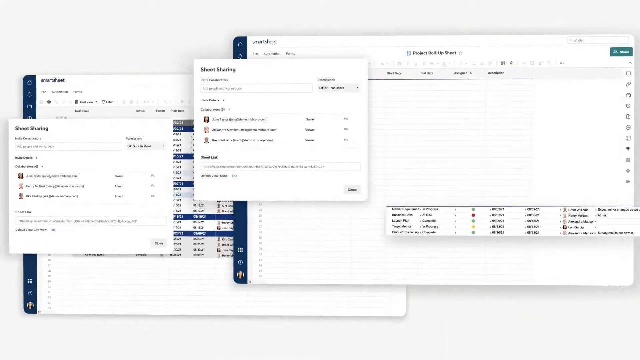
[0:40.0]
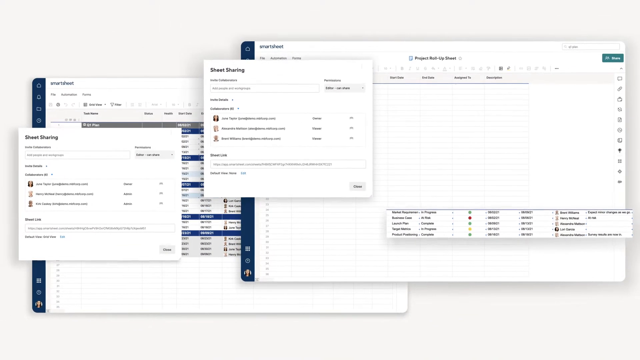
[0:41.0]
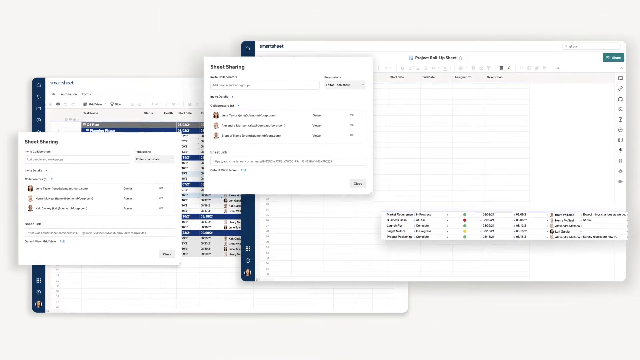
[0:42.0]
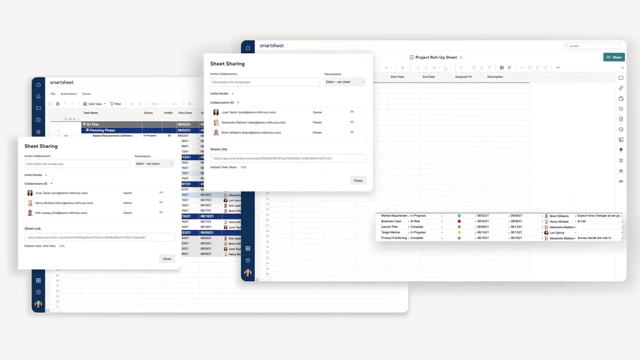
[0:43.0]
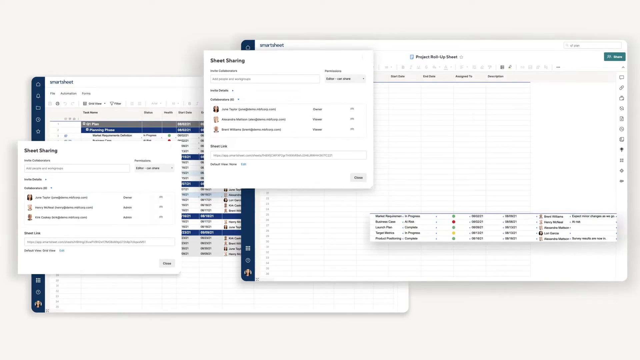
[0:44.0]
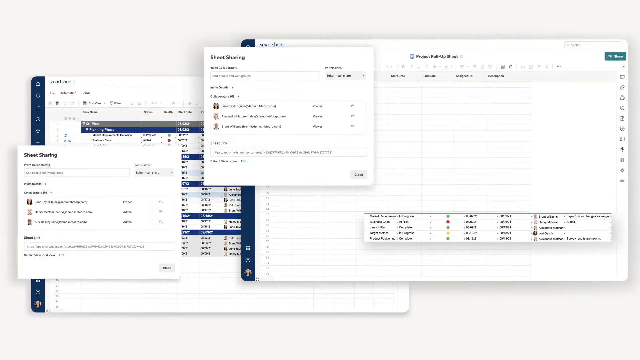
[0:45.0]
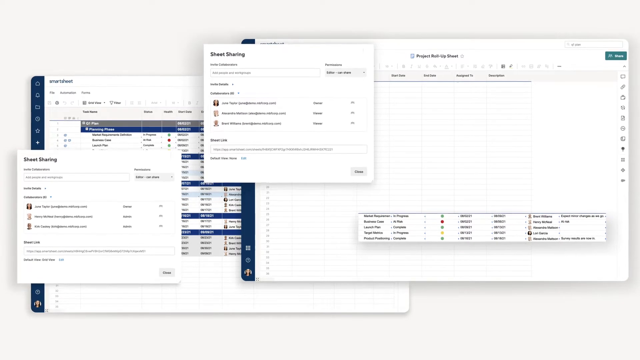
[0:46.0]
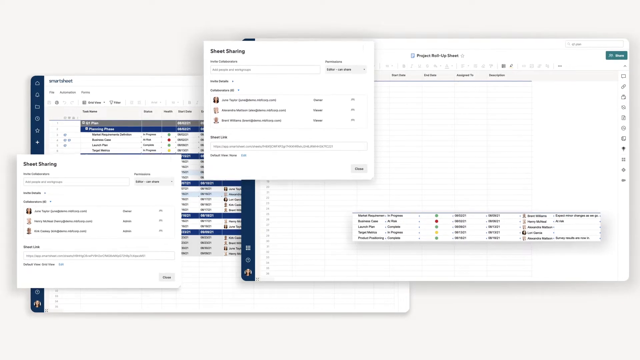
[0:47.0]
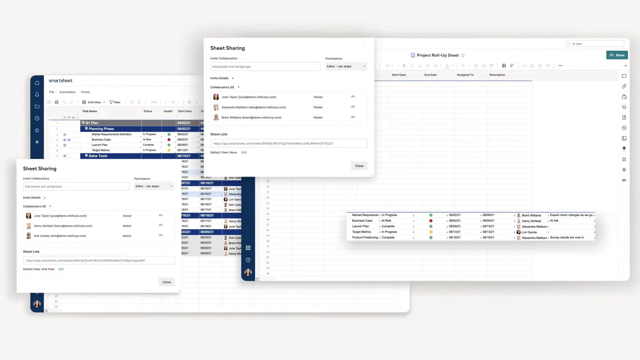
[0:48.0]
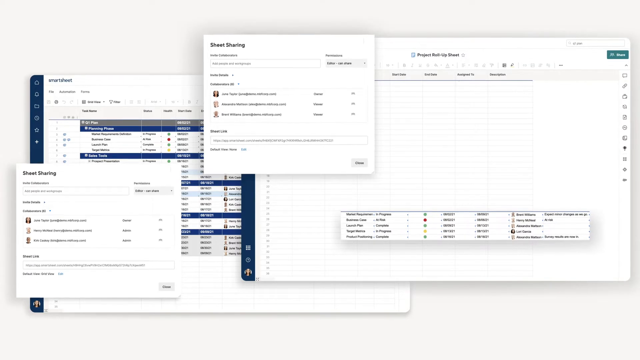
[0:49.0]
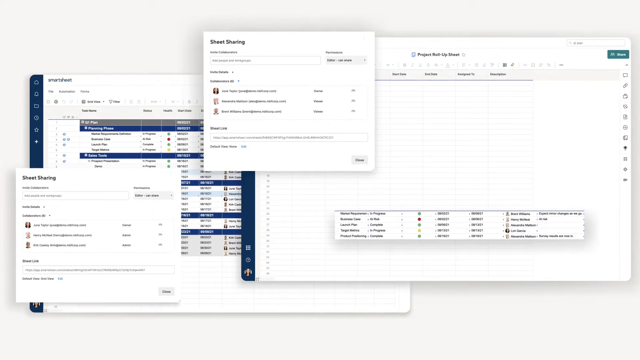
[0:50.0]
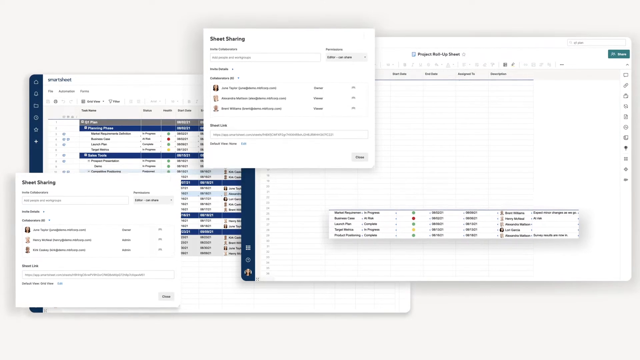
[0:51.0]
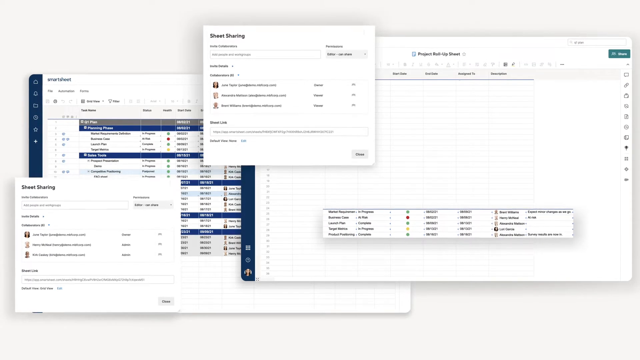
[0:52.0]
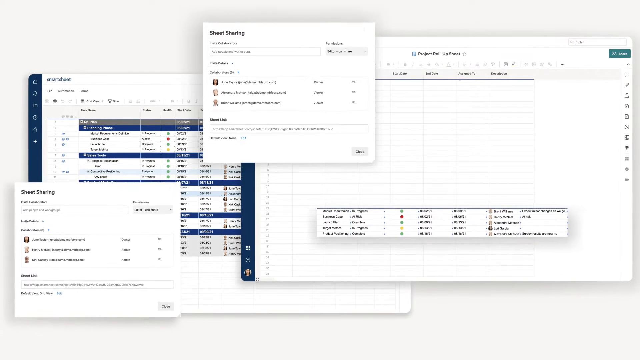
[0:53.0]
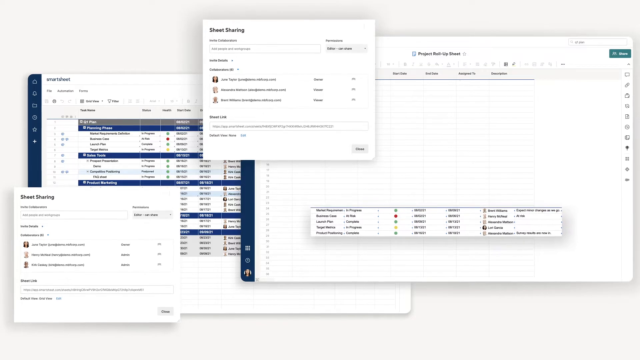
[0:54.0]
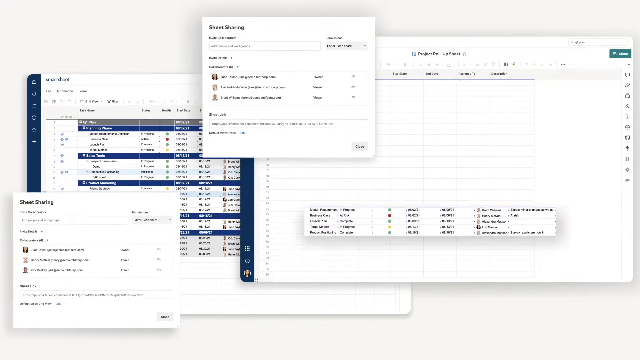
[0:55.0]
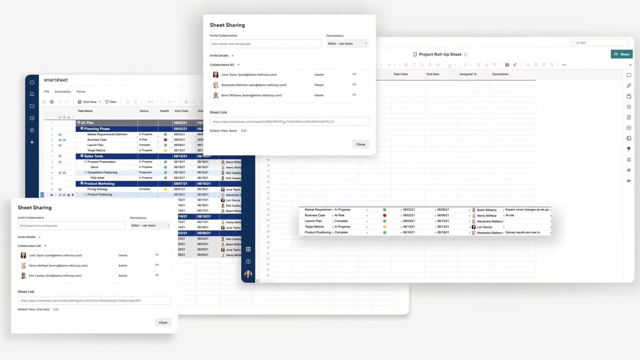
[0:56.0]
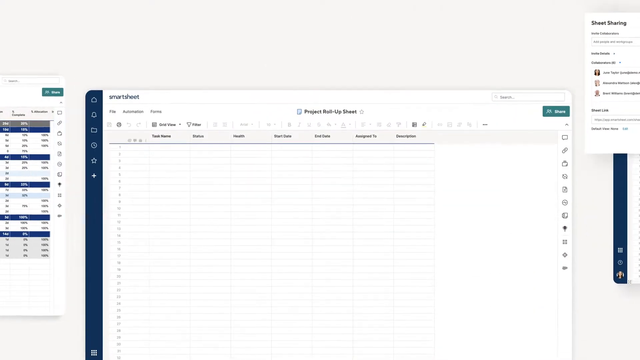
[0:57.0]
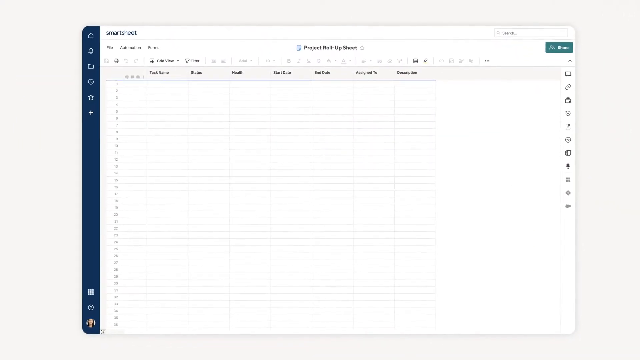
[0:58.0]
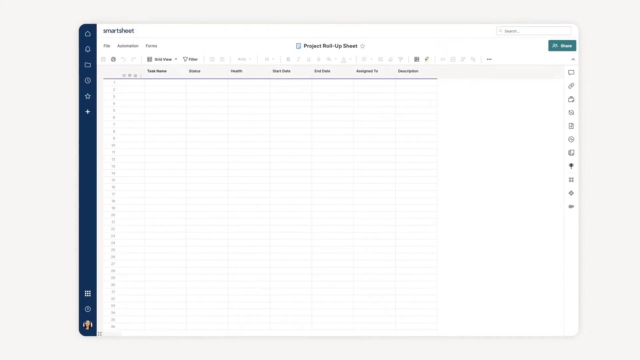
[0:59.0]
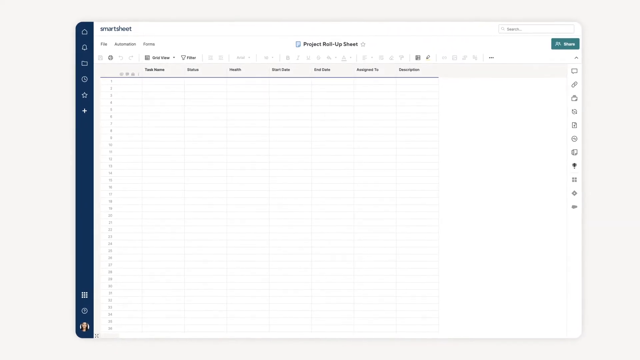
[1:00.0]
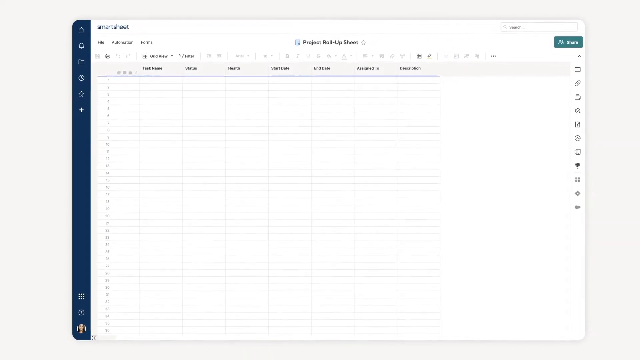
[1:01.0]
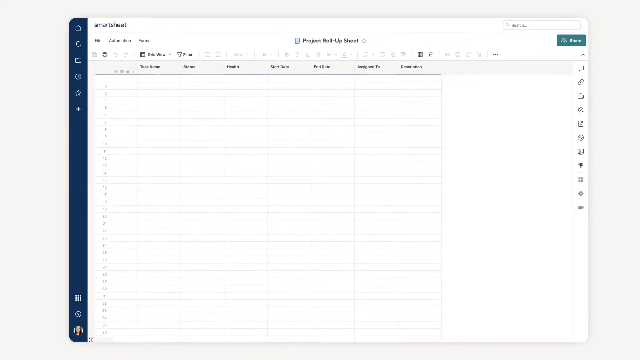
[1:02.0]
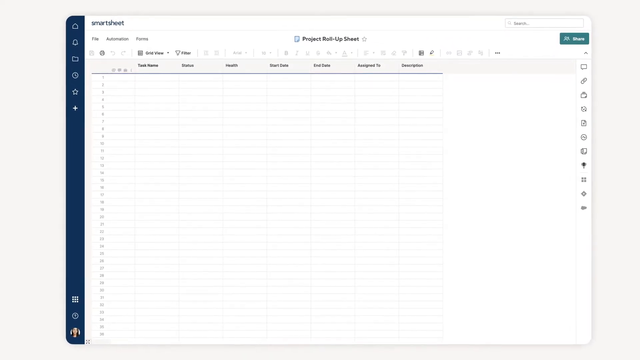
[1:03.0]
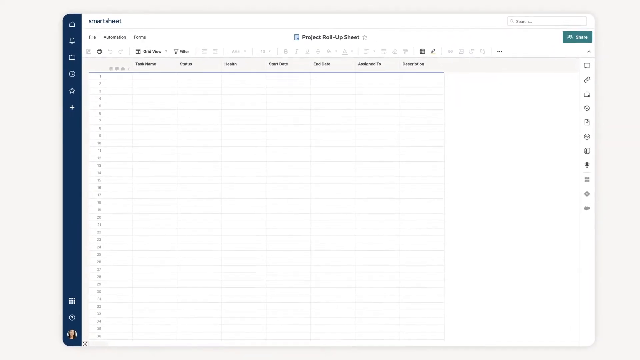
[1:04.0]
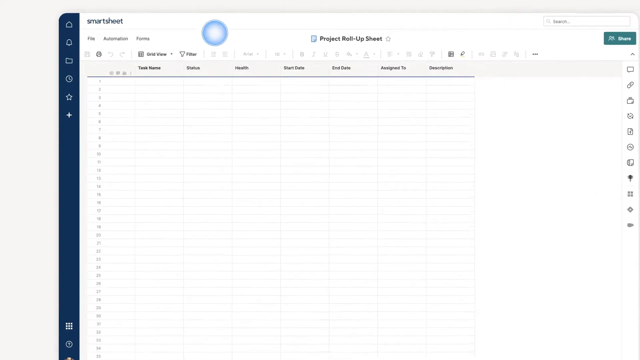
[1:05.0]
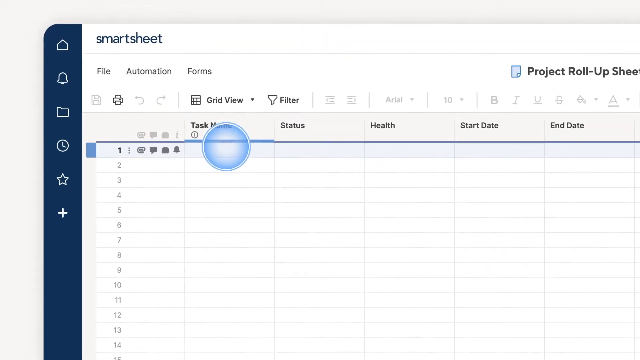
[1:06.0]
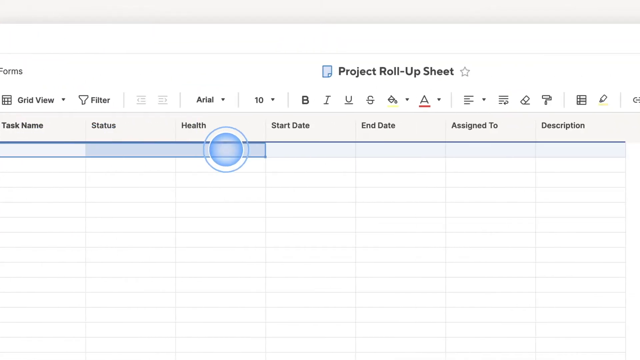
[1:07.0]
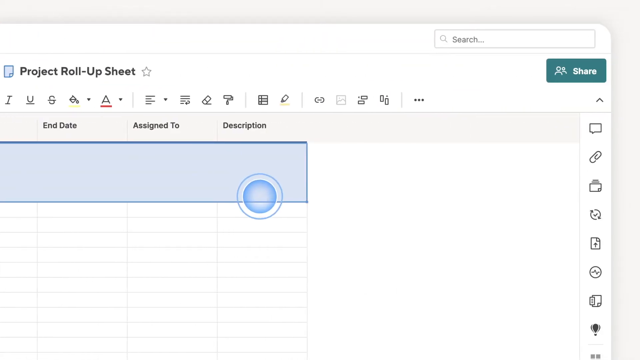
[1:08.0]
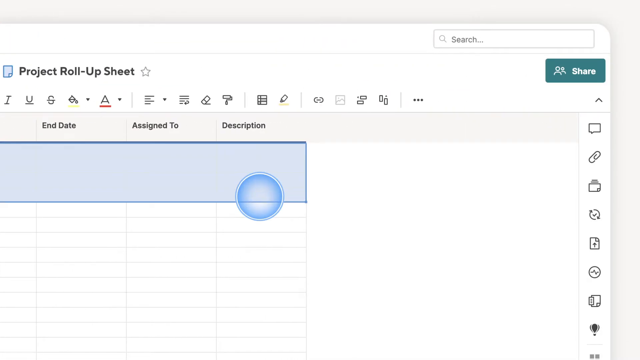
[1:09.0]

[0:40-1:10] More of the Smartsheet sheet sharing is shown, with about four different pages put up on the screen. There is a lot of data, hard to read because it is far off in the distance, and the sheets move slowly on the screen. Again it says "project roll up sheet"; it looks like a typical Excel spreadsheet. The columns are task name, status, health, start date, end date, assigned to and description, with description as the last tab. The task name is highlighted first, then the highlight goes all the way across until the whole area is highlighted, apparently in preparation for importing something into those boxes.